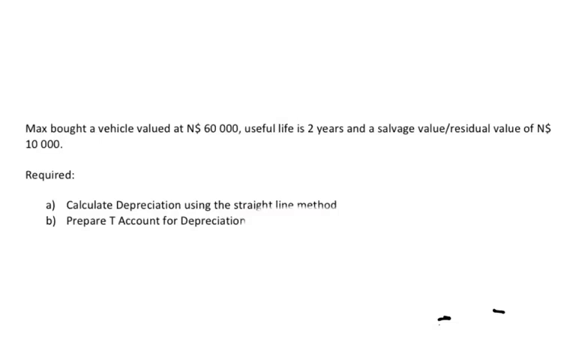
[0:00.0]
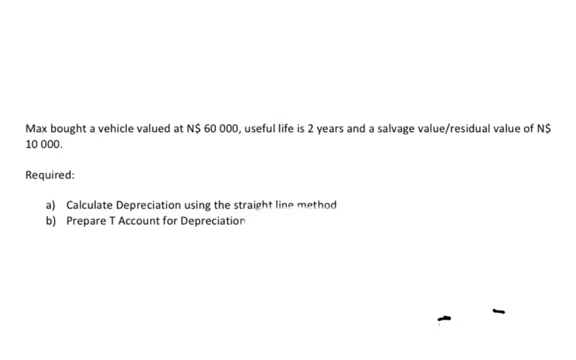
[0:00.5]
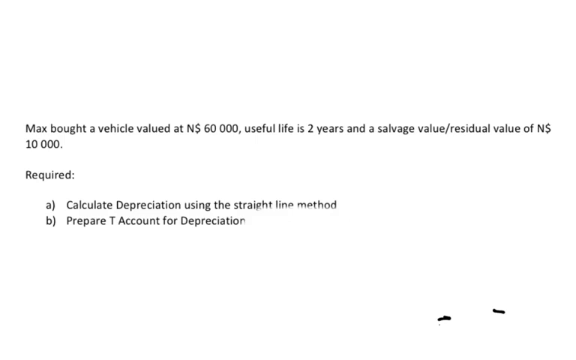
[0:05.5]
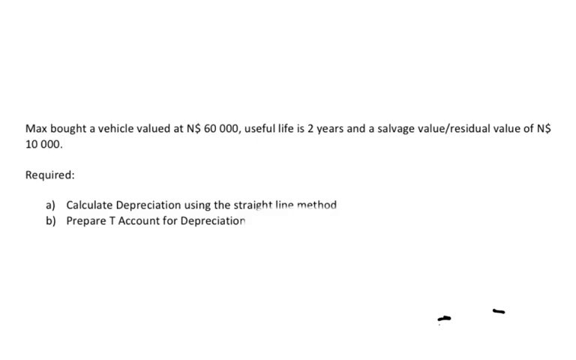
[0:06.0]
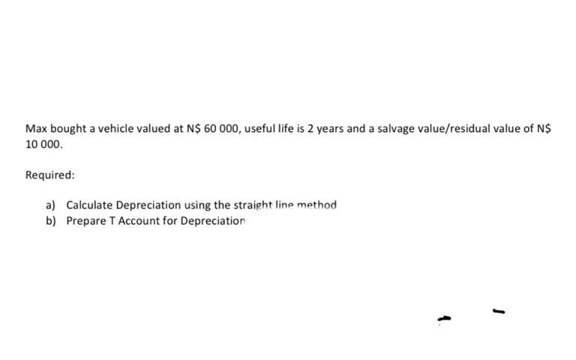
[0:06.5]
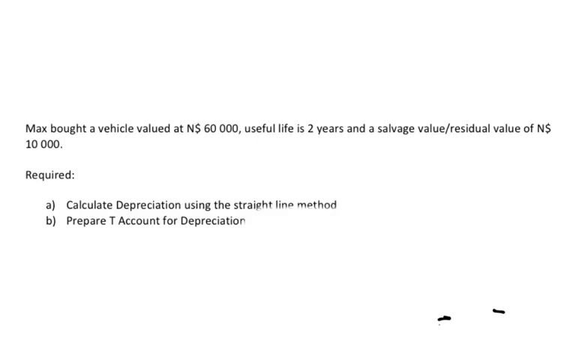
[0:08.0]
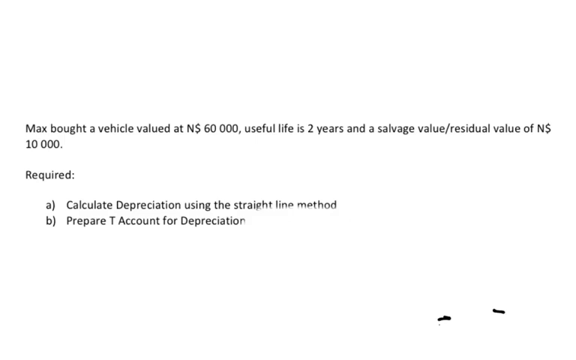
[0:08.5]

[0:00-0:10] The video opens on a white slide with a completely blank background and words overlaid on top that appear to be a mathematical problem. The slide reads: "Max bought vehicle valued at N$60,000, useful life is two years and a salvage value/a residual value of N$10,000." Below that it says "required:", and below that "a)", followed by a small space and "calculate depreciation using the straight line method"; the words "straight line method" appear to be slightly erased from the bottom. Below that it says "b)", then after a small space, "prepare t account for depreciation", with the n at the end slightly faded. On the bottom right of the slide there are two lines.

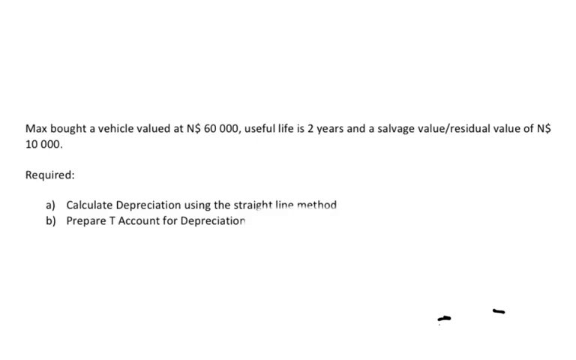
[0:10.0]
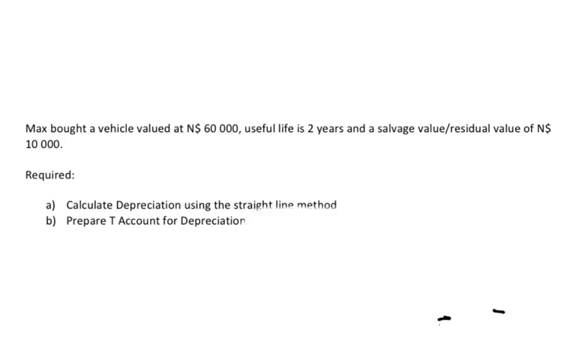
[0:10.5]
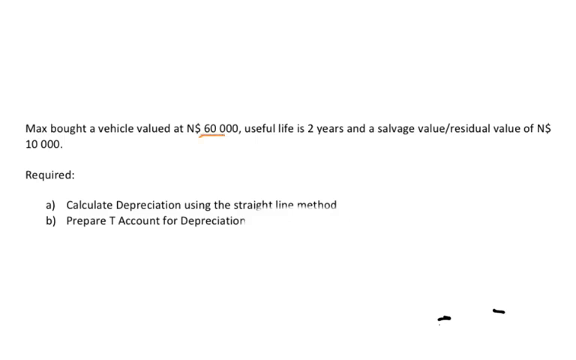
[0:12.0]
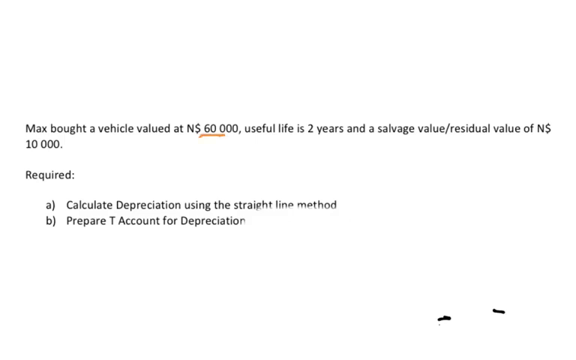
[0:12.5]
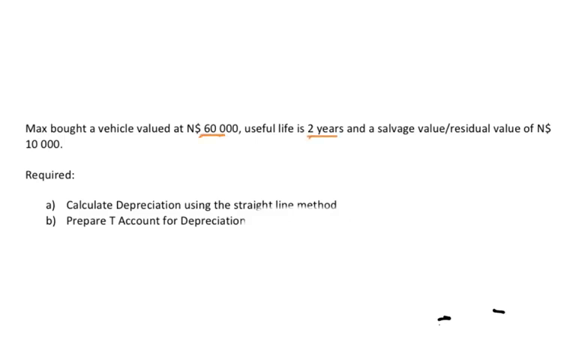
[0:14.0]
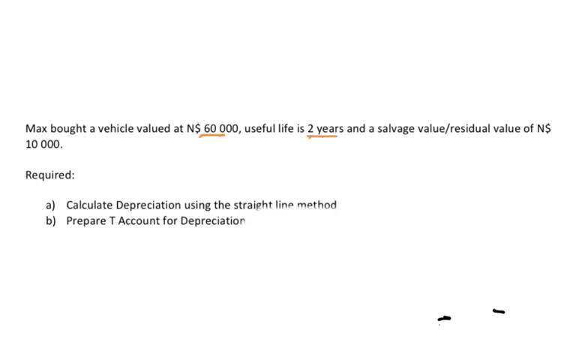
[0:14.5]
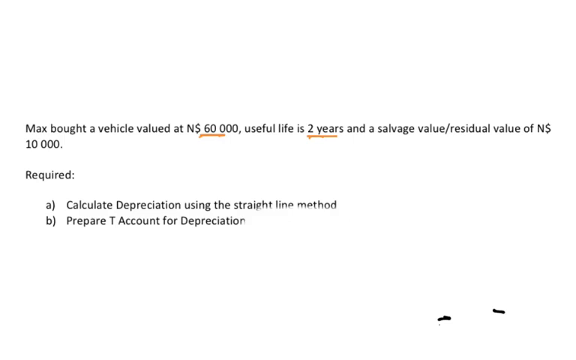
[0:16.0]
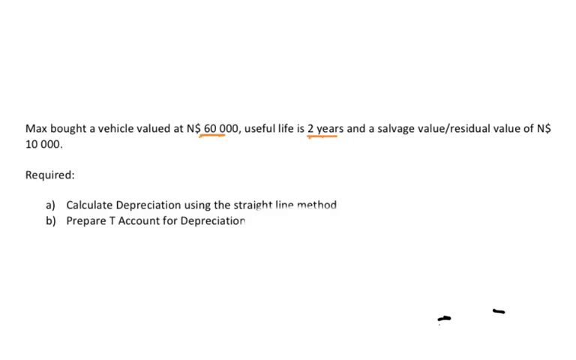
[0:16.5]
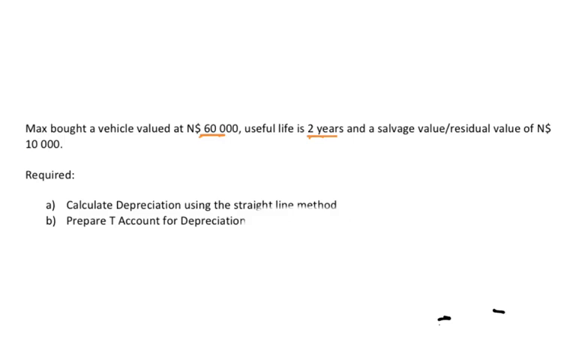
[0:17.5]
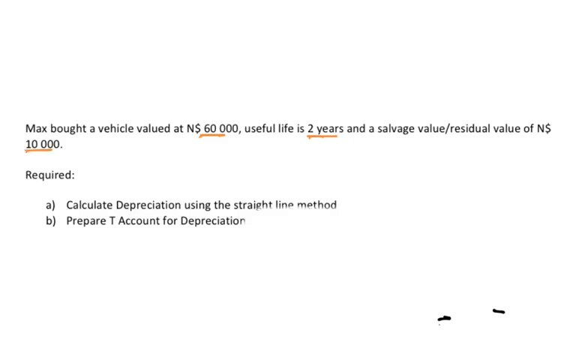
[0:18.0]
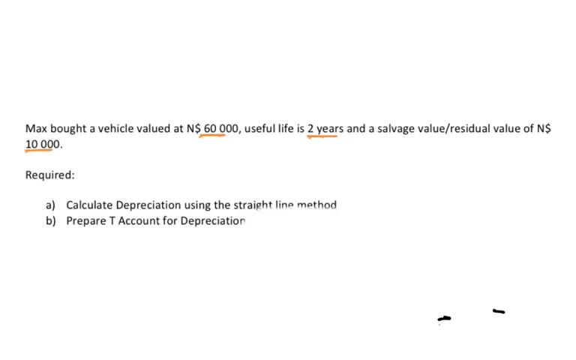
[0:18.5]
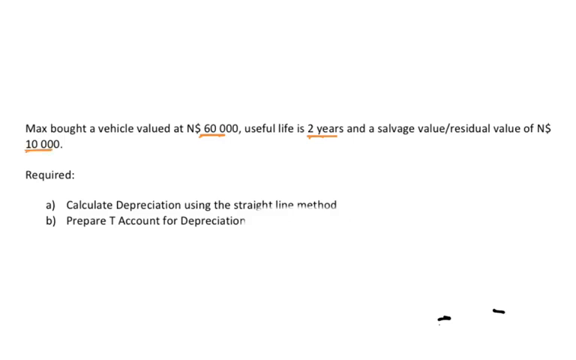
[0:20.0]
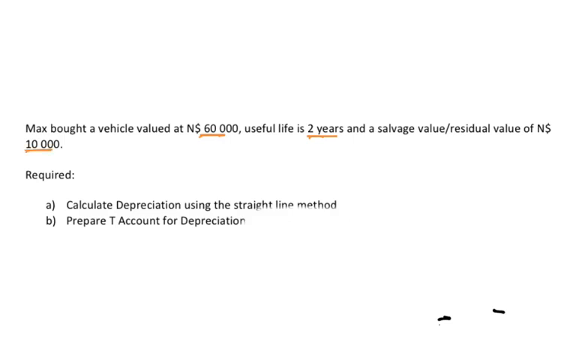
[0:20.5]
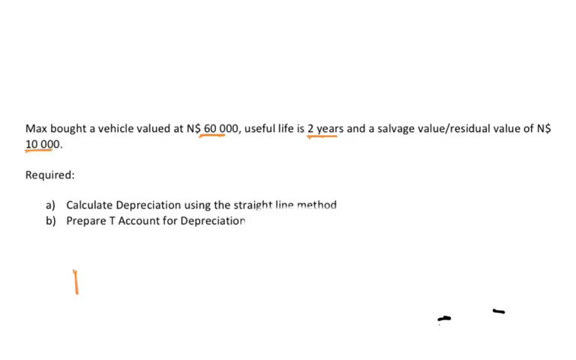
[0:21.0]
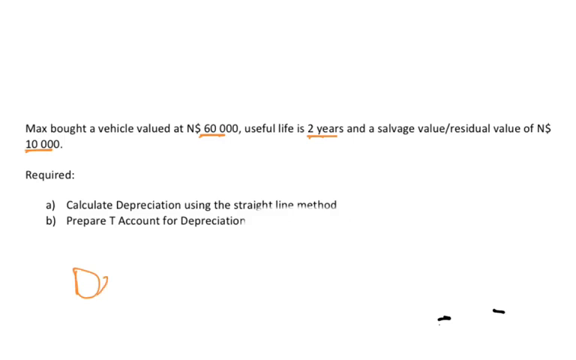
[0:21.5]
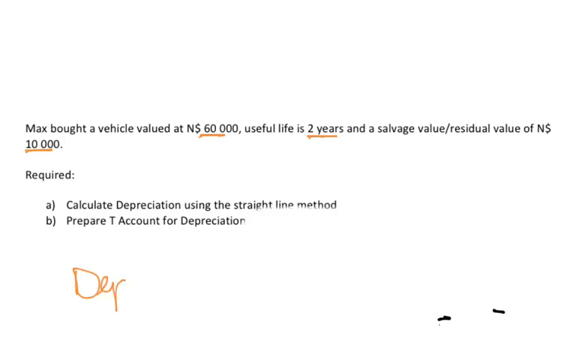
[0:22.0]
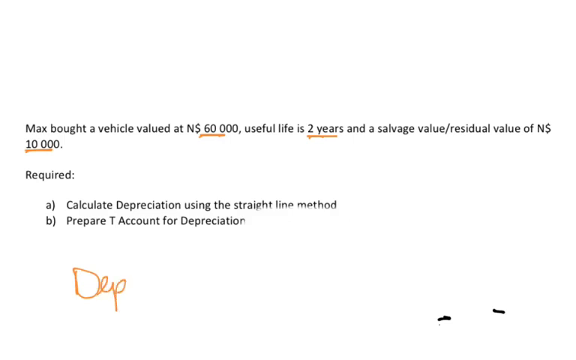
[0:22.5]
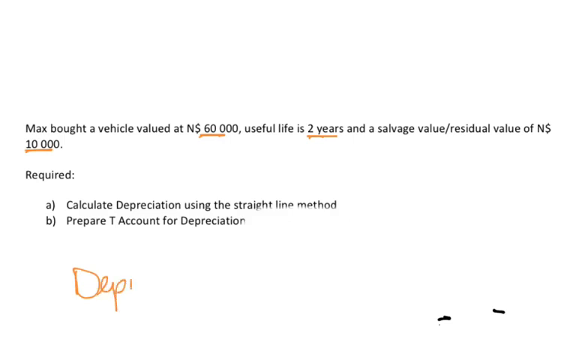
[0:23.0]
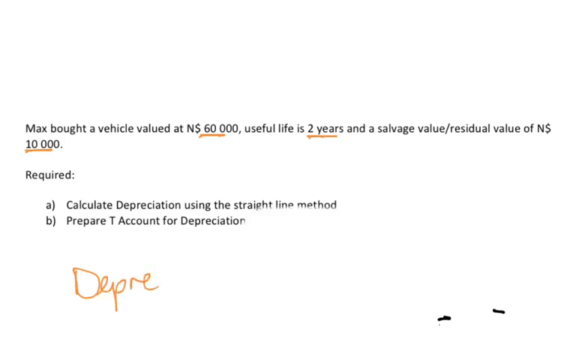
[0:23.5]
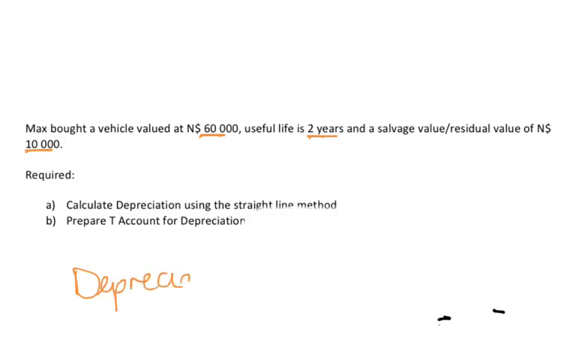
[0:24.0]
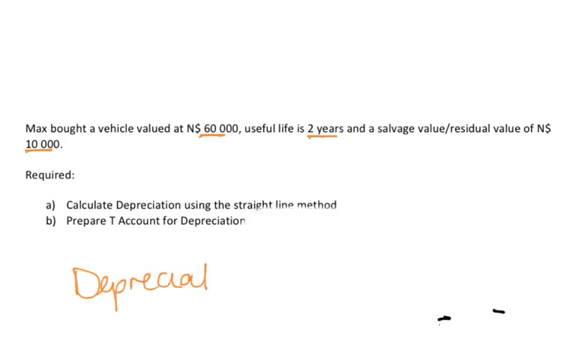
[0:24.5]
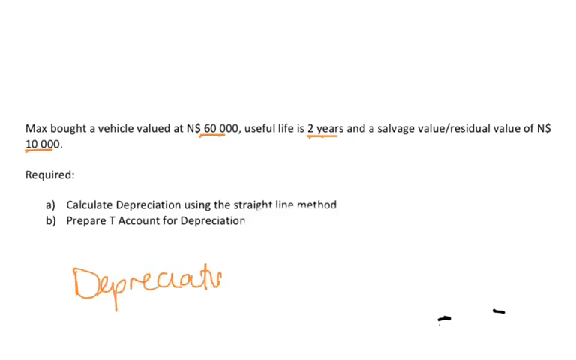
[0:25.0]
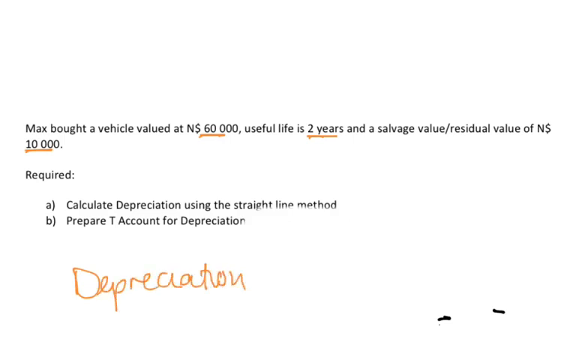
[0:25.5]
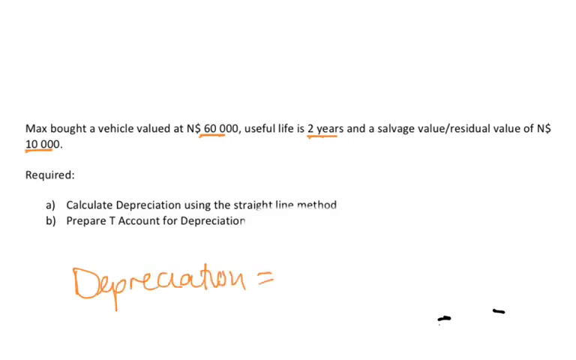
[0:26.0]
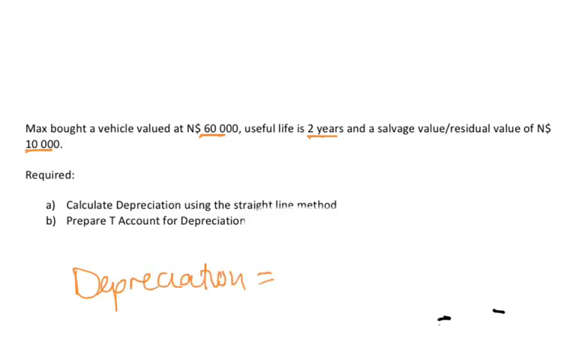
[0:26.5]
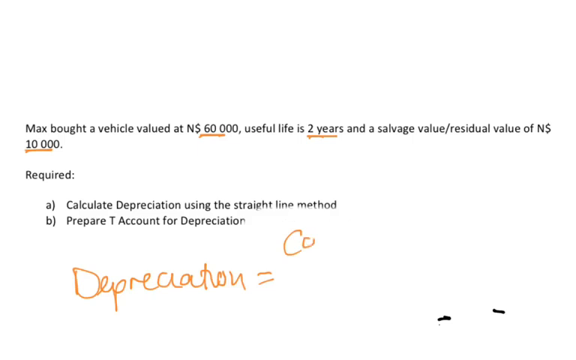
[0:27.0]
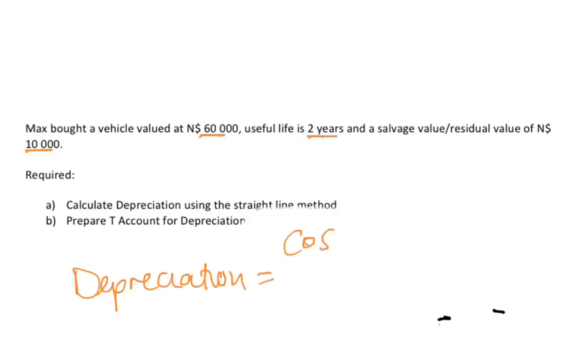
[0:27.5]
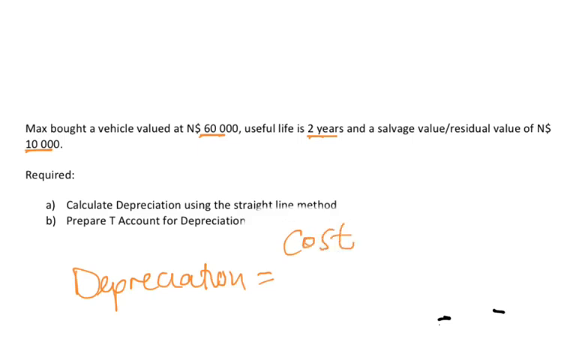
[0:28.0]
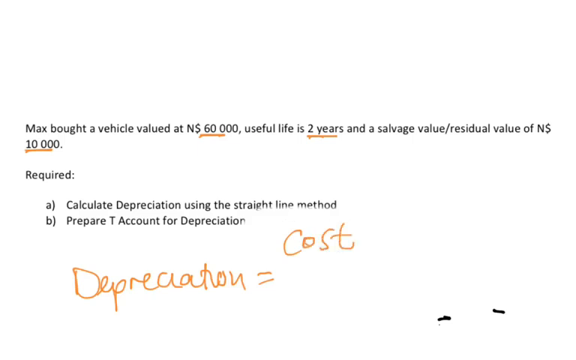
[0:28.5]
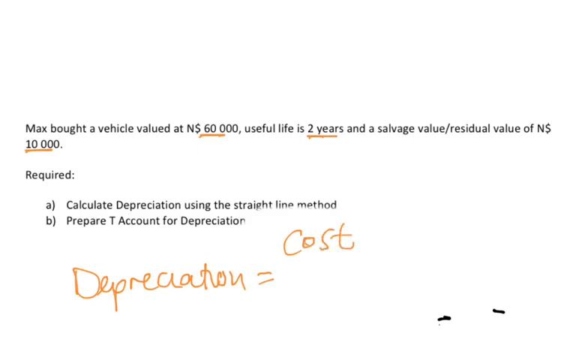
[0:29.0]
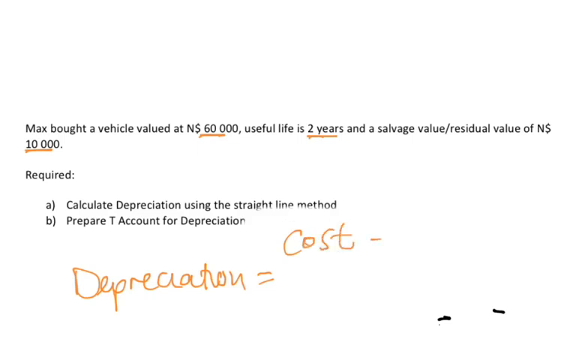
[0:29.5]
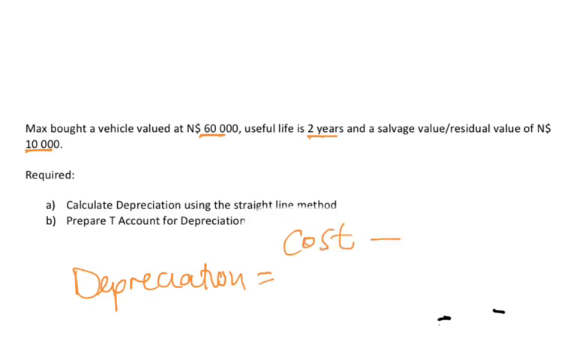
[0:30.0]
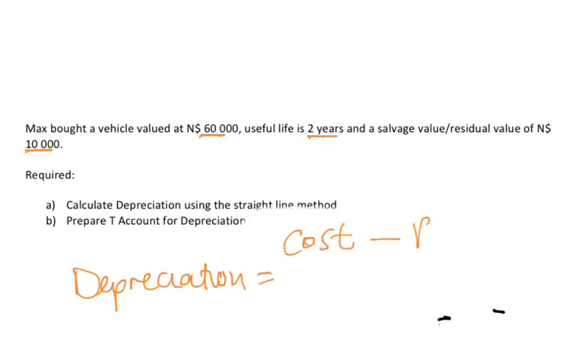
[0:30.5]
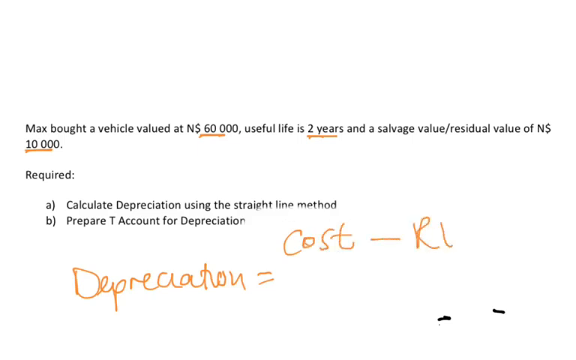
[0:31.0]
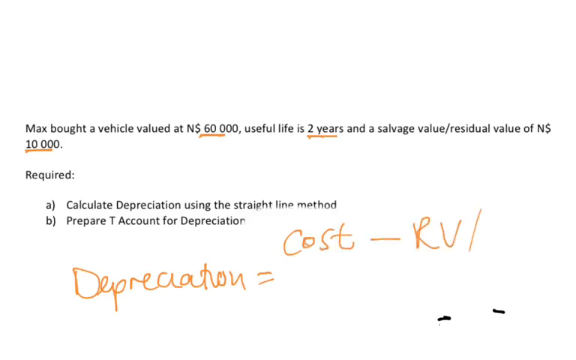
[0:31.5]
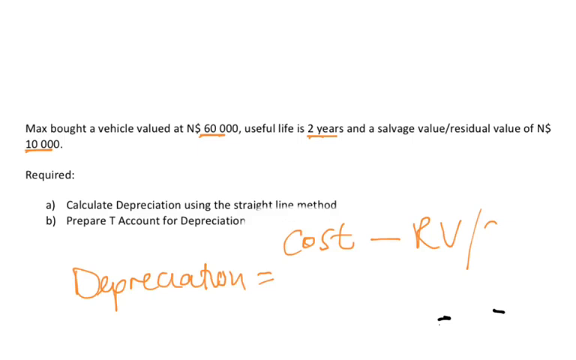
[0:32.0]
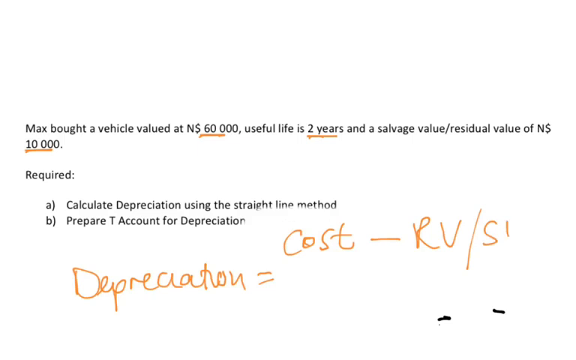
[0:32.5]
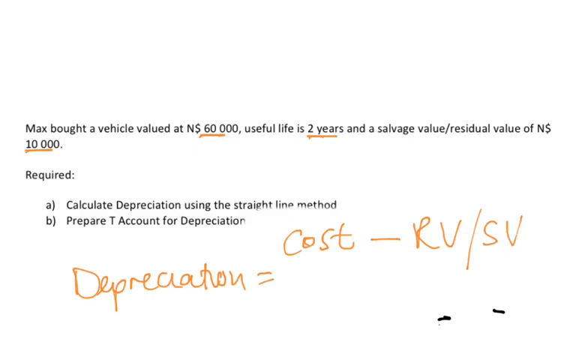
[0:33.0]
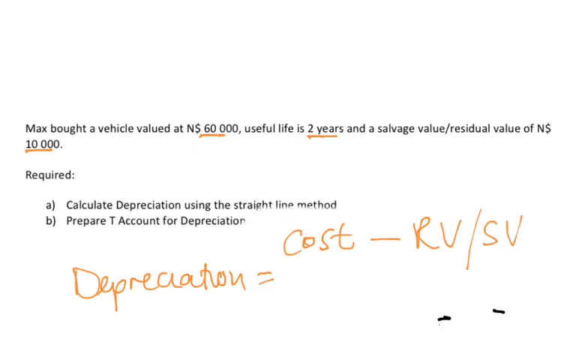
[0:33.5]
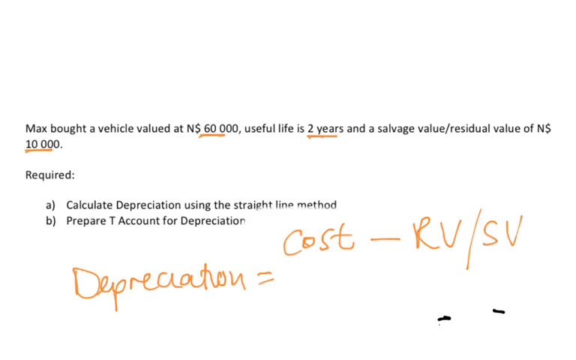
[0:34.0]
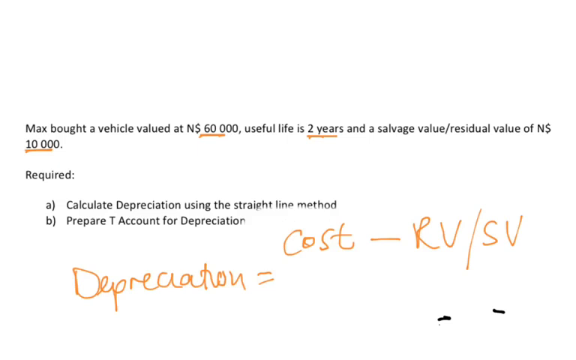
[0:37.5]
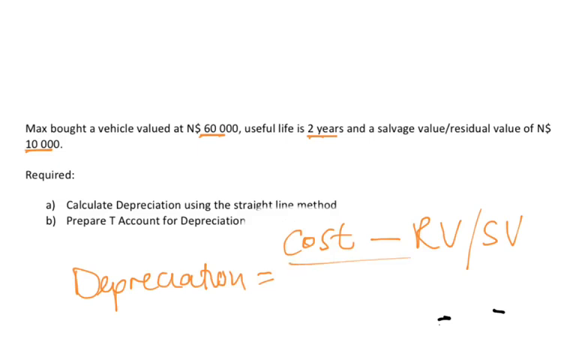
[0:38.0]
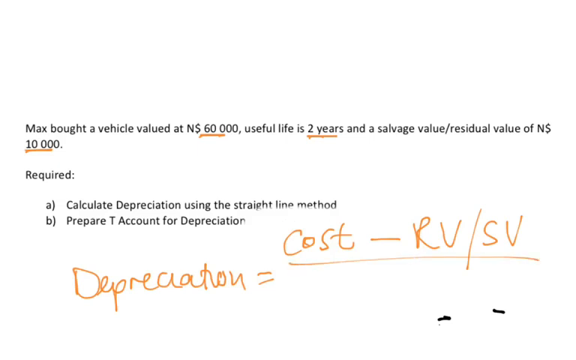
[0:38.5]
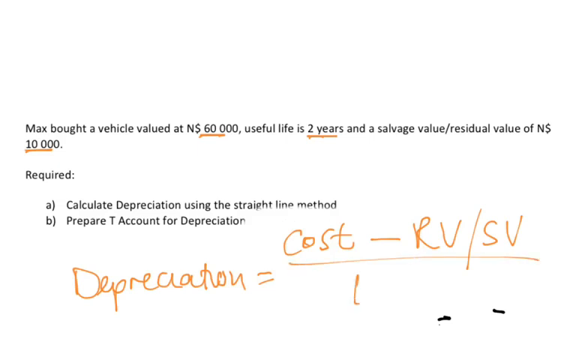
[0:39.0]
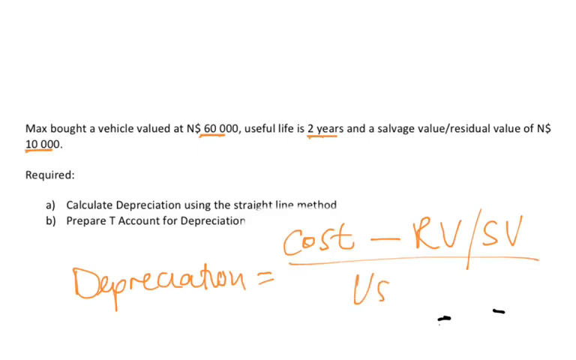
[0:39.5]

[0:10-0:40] A slide with a completely blank background shows words in front of it that appear to be a mathematical problem. It reads: "Max bought a vehicle valued at N$60,000, salvage value/residual value of N$10,000." Below that it says "required:", and below that "A" with a parenthesis, a space, and then "calculate depreciation using the straight line method"; part of the letters of "straight line method" appears to be erased at the bottom. Below that it says "B)", then after a space, "prepare a T account for depreciation", with the n at the end slightly faded. The numbers in the problem are then underlined in orange ink, and words begin to be spelled out at the bottom: "depreciation = cost - RB/SB".